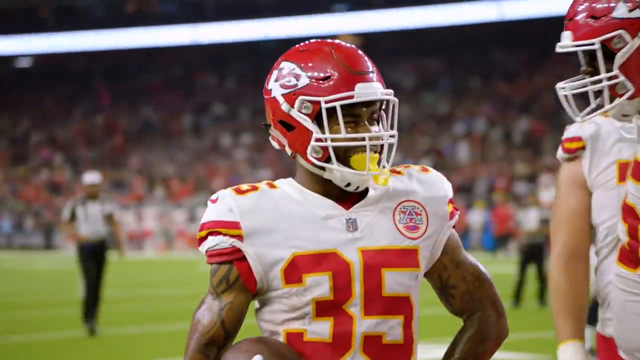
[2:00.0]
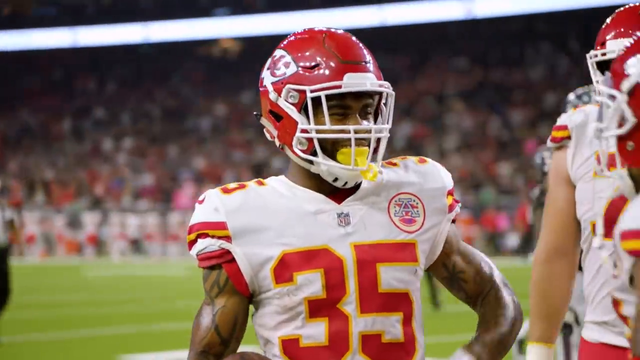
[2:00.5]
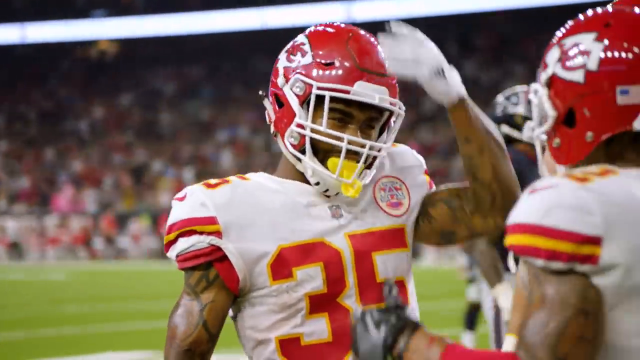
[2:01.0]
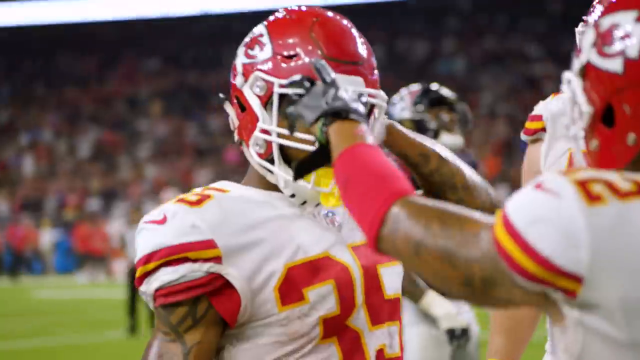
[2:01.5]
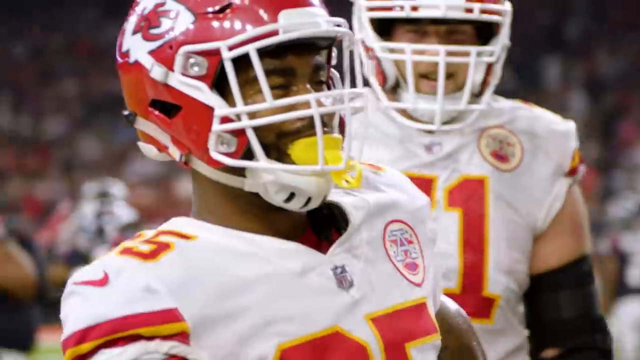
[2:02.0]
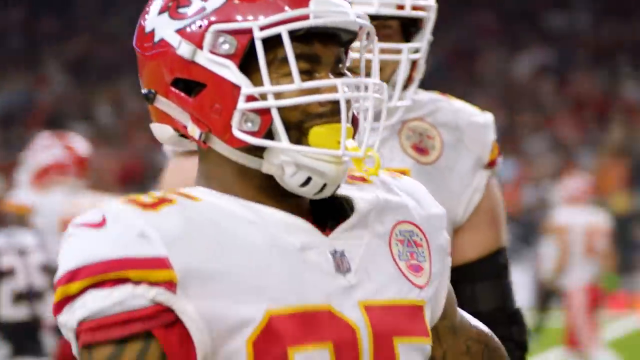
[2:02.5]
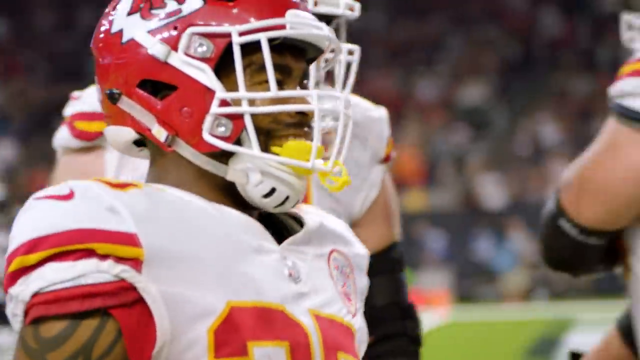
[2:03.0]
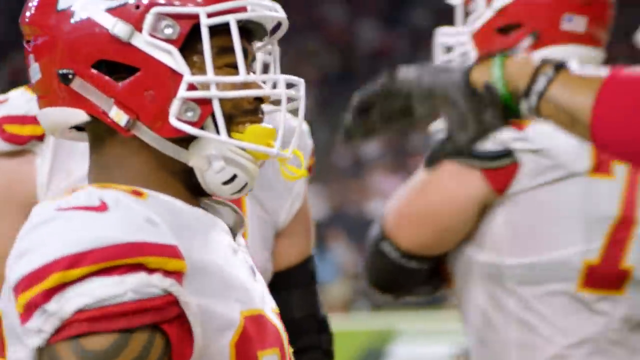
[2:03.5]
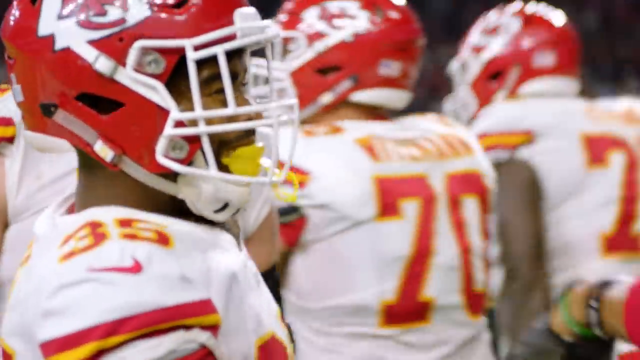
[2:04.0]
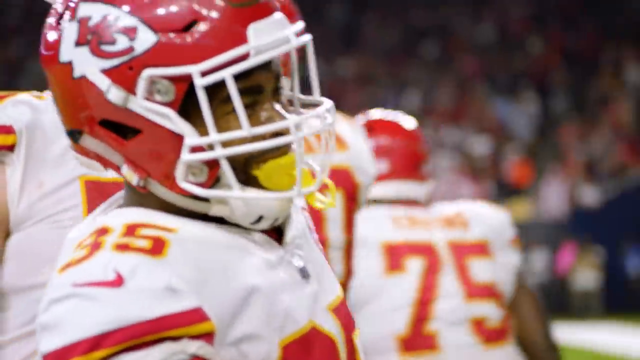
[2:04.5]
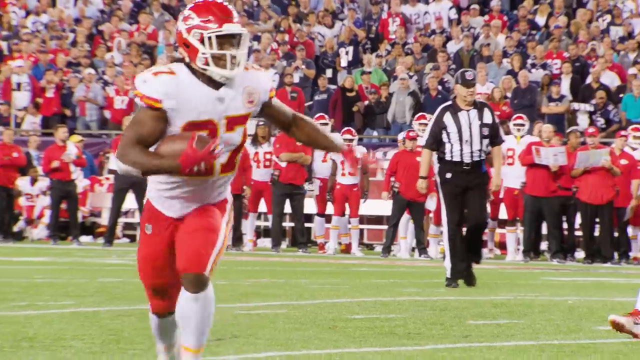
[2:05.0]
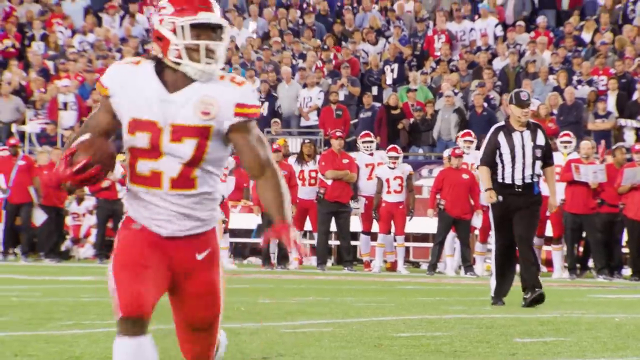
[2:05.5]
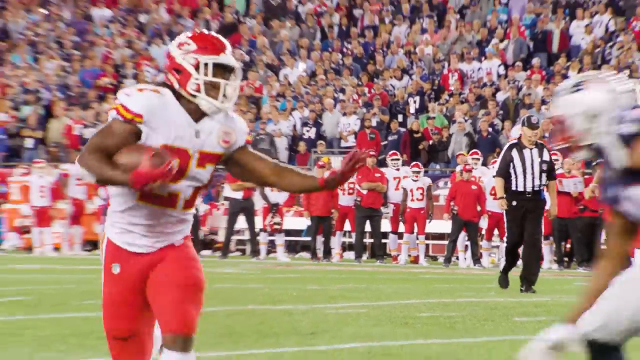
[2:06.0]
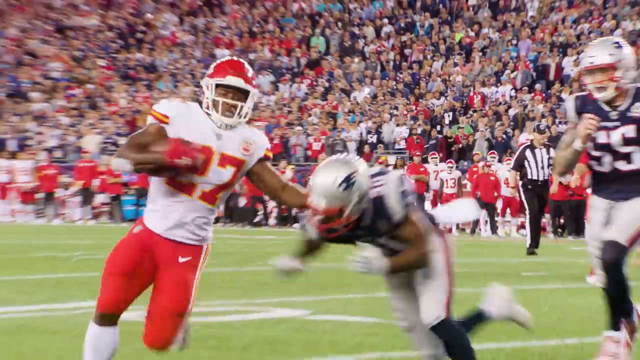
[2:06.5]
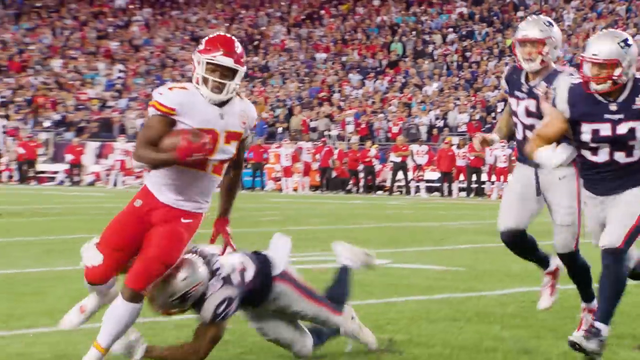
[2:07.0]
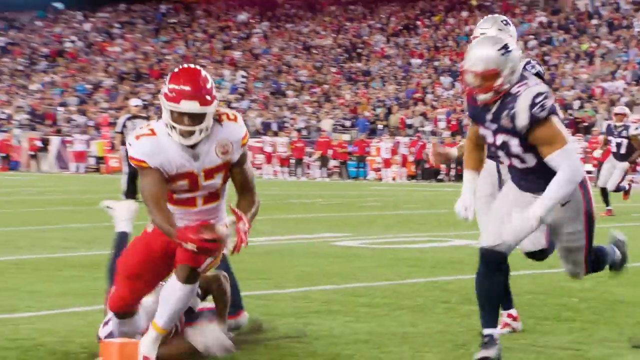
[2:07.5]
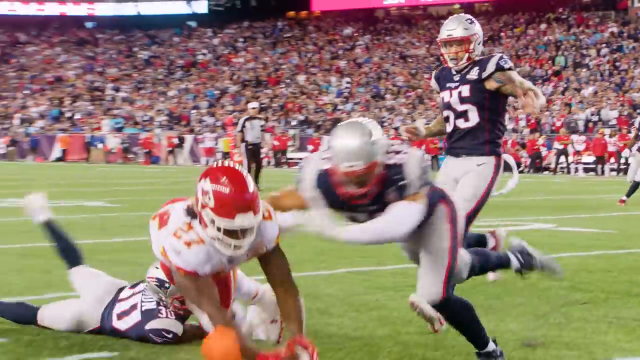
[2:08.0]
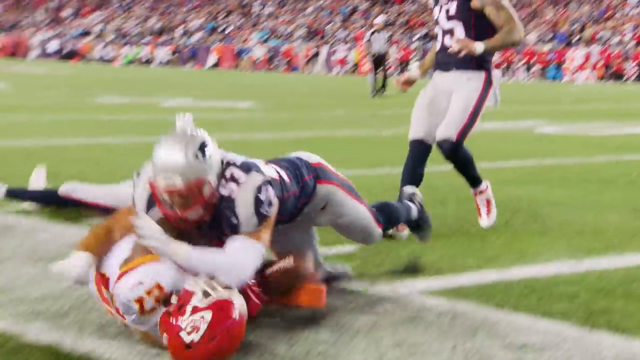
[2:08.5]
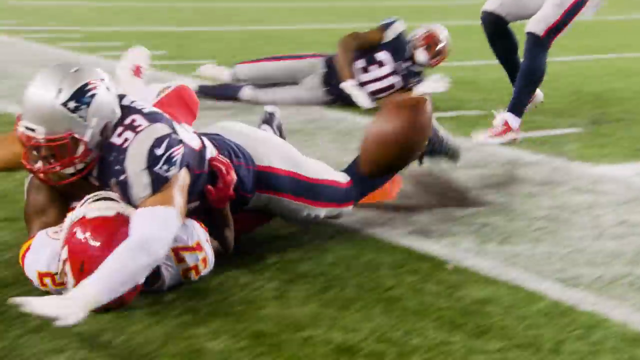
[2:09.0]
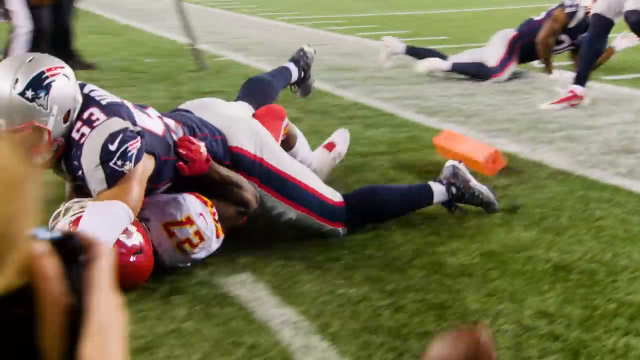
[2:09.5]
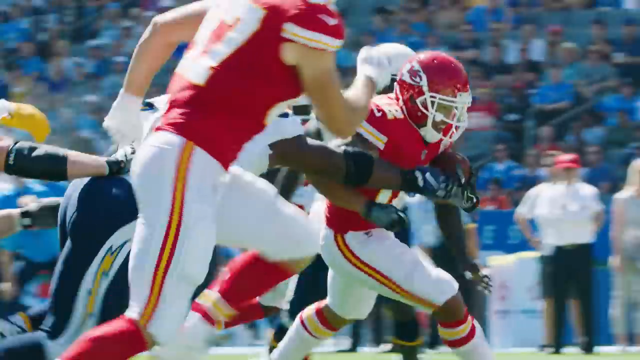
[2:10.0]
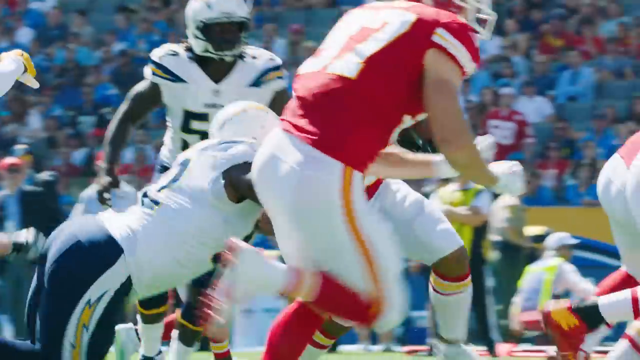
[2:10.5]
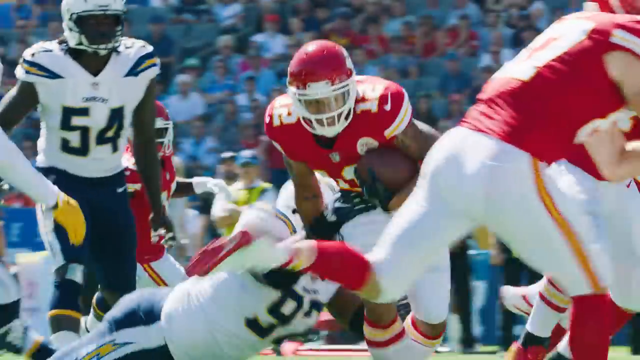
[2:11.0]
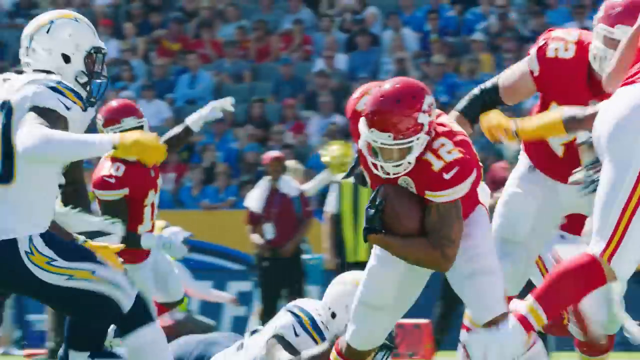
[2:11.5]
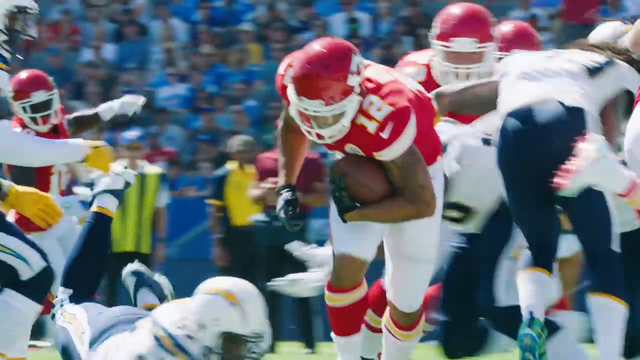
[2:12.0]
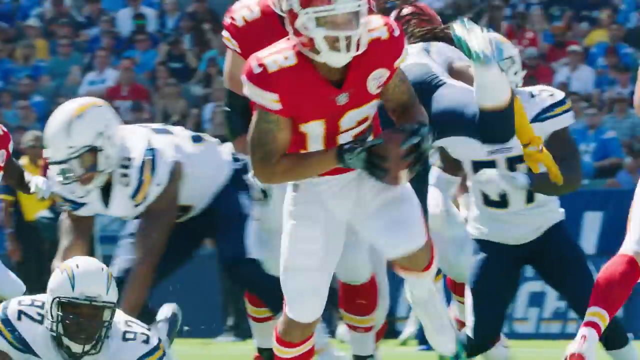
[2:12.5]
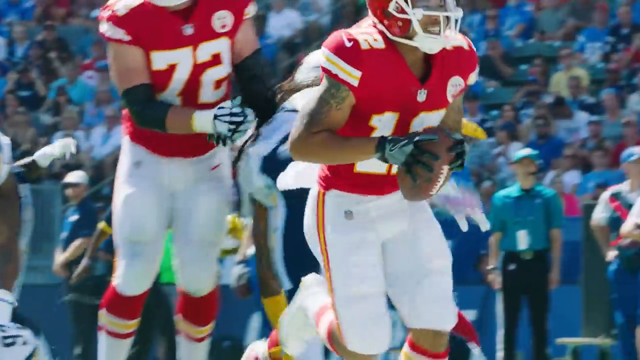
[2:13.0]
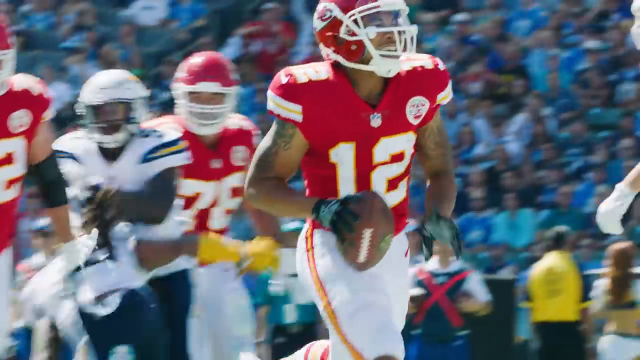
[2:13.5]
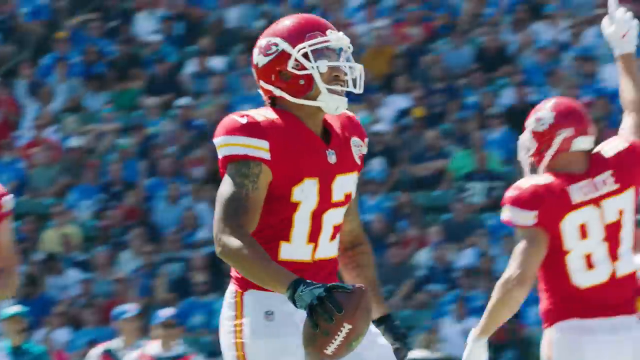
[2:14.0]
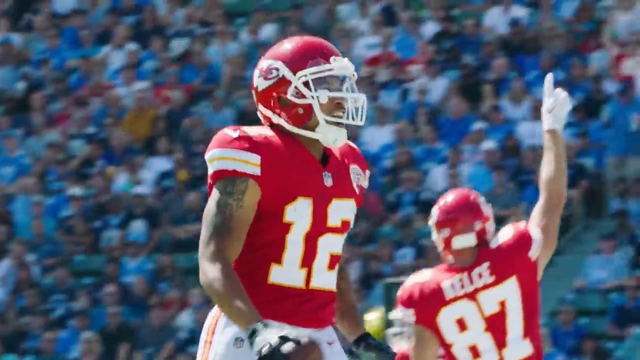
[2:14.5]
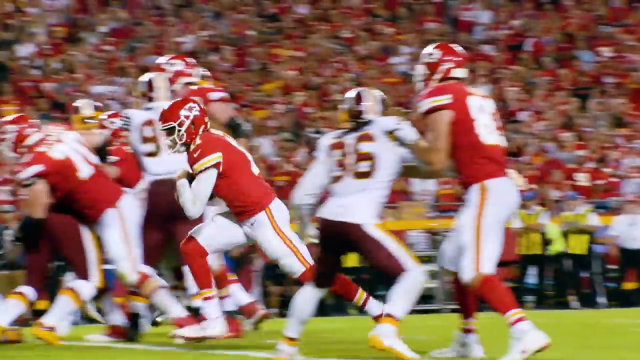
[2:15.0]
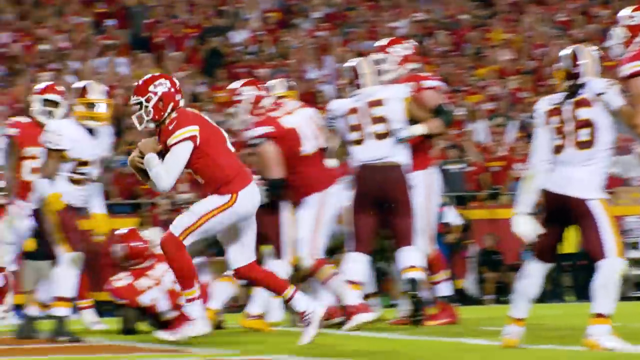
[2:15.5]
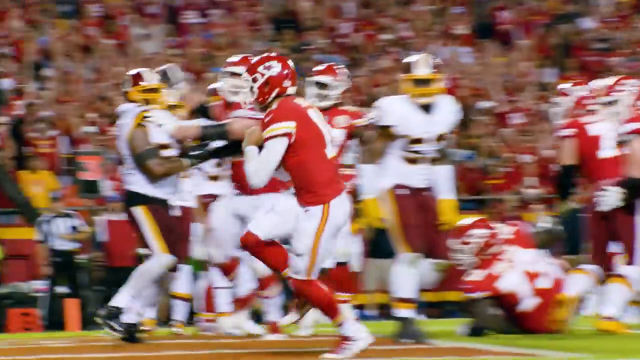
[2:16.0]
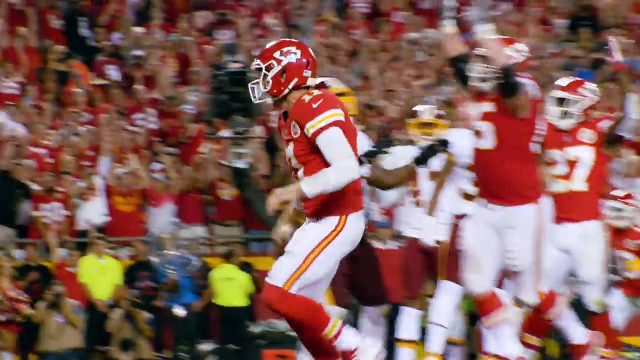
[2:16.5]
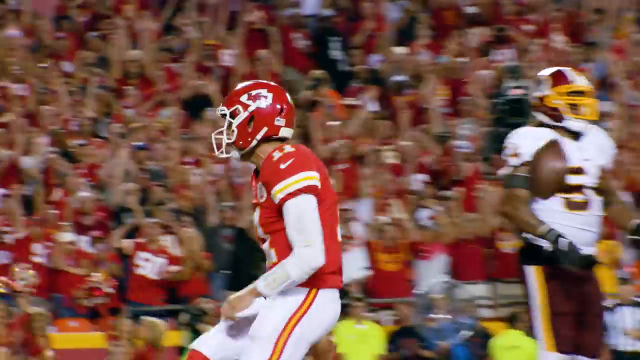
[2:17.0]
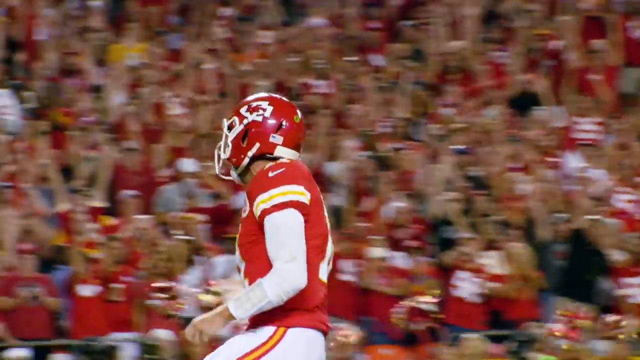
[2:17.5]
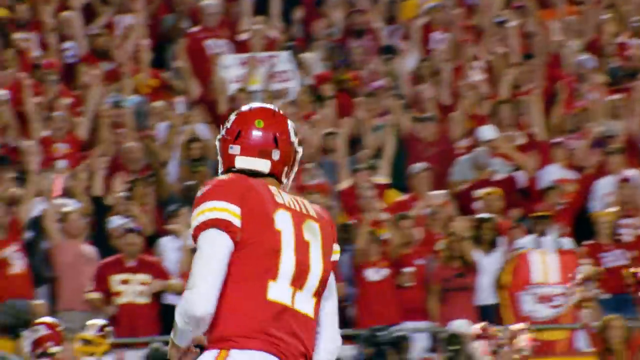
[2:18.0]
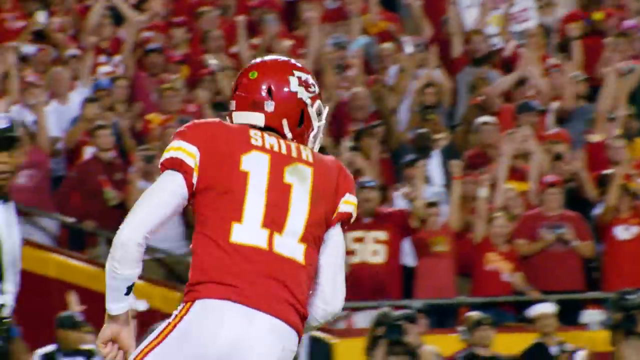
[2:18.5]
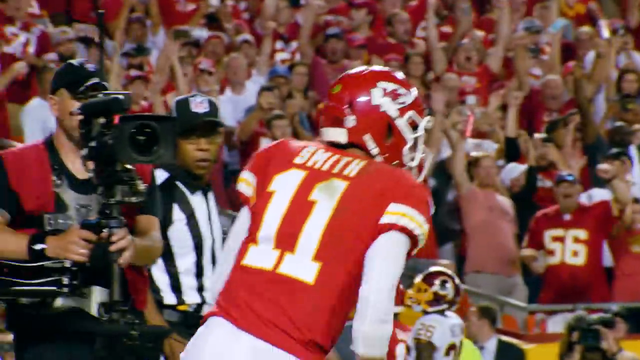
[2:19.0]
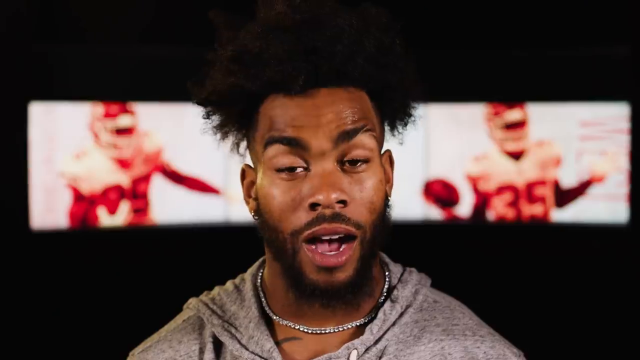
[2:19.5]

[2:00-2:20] Number 35, possibly Chicandric West, celebrates on the touchline with teammates and makes a gesture with his left hand on the top of his head. In the background to the left is a blurred opposition player in a blue uniform whose number starts with a 5; the second digit is not visible. On the right, a large white player wearing 71 comes to celebrate with number 35, who wears a yellow mouth guard that protrudes between his lips. A separate clip shows an individual rushing to make a touchdown with the football held in the crook of his right arm. He runs to the right of the opposition players, hands one of them off as he passes and touches down in the area just as he is tackled by another blue-shirted individual who arrives just too late. Another clip shows a red-shirted individual wearing 12 with the ball in the crook of his left arm in a busy scene of opposition players and teammates. To the left are a couple of individuals, one of whom seems to be wearing yellow gloves; the right is much more crowded with players from both sides, and crowd scenes are visible in the background. Number 12 appears to have made a touchdown as he slows down in the end zone, then turns to celebrate; he has the name Smith on his back.